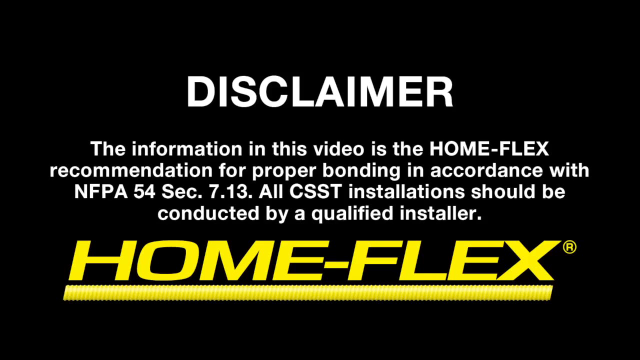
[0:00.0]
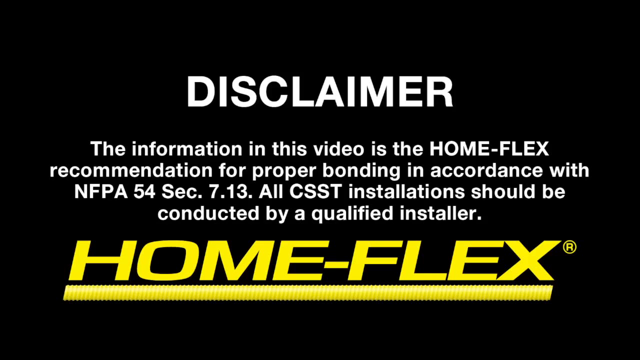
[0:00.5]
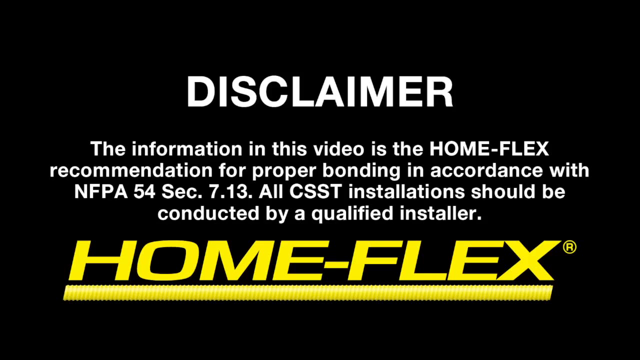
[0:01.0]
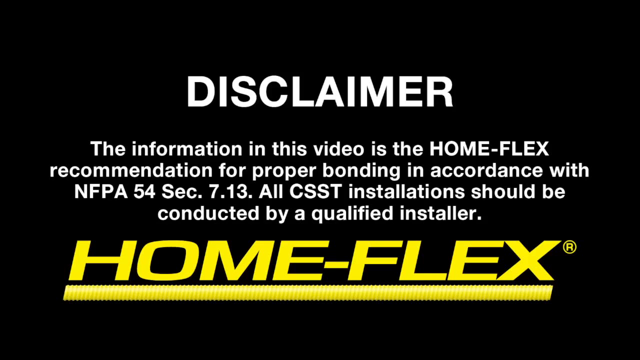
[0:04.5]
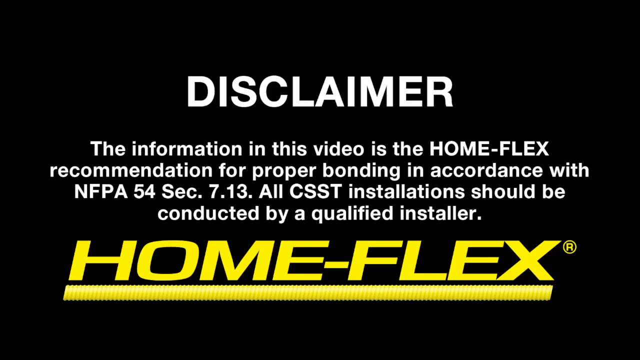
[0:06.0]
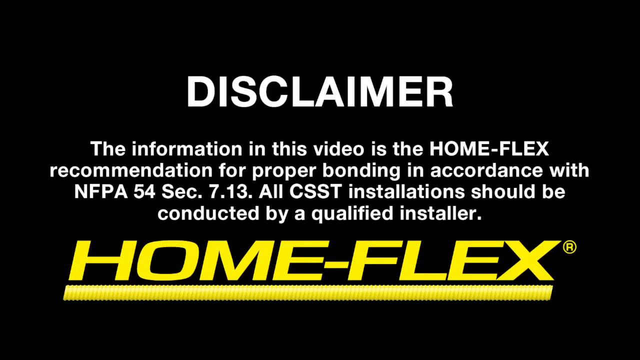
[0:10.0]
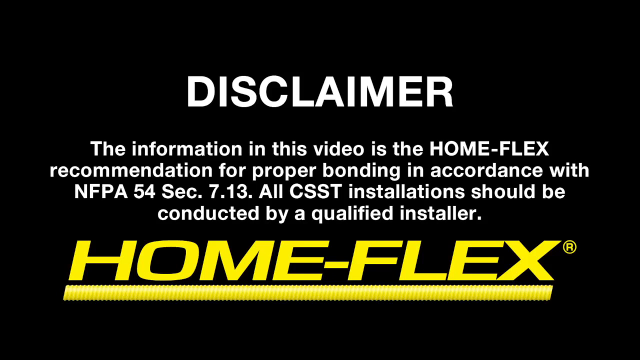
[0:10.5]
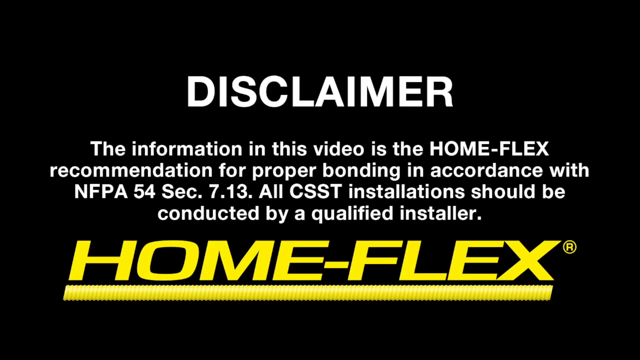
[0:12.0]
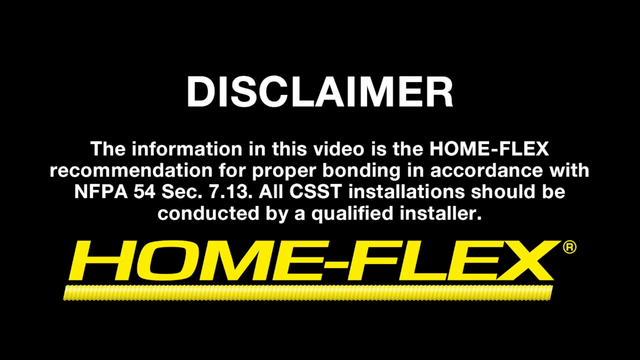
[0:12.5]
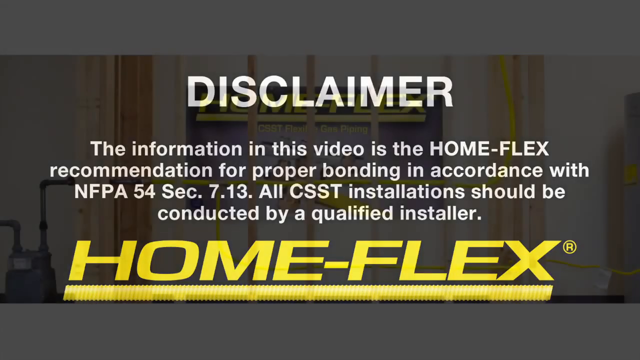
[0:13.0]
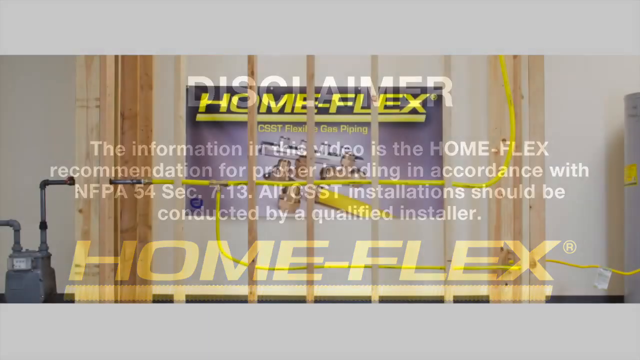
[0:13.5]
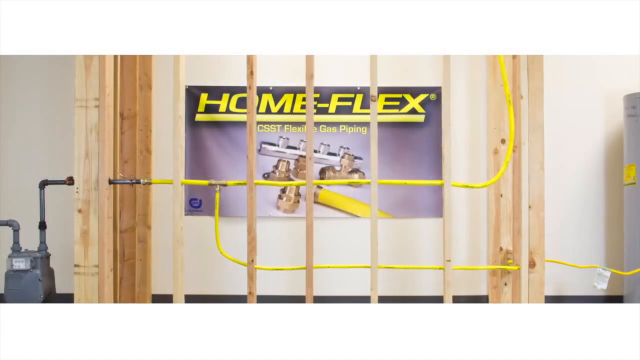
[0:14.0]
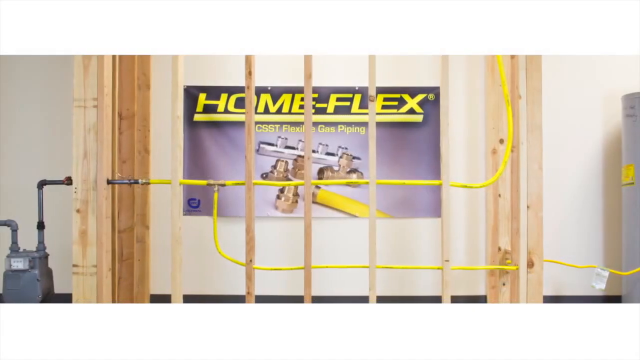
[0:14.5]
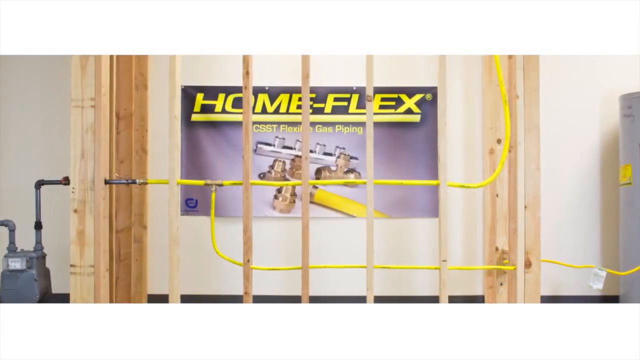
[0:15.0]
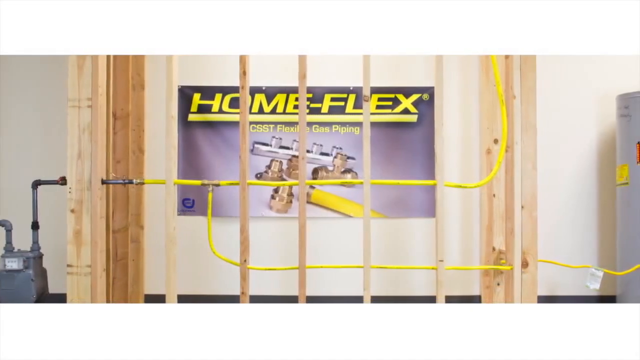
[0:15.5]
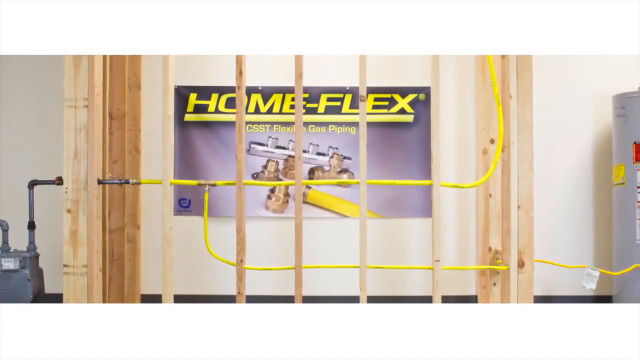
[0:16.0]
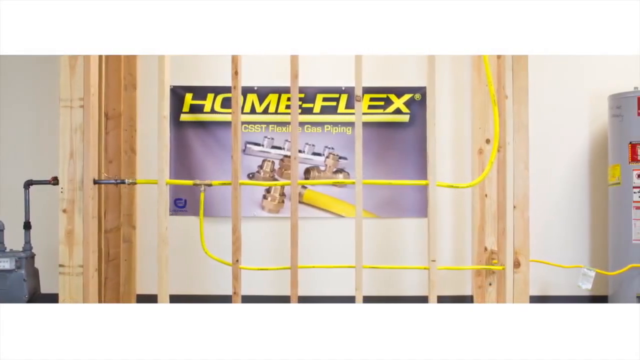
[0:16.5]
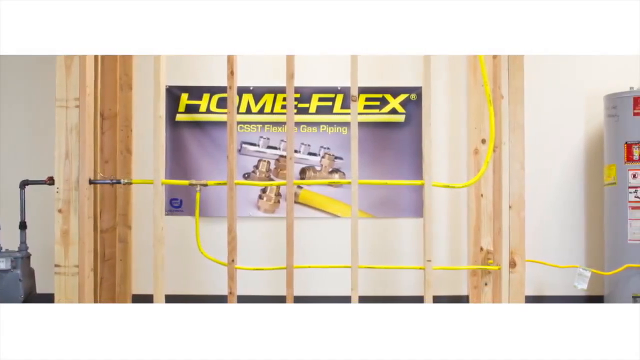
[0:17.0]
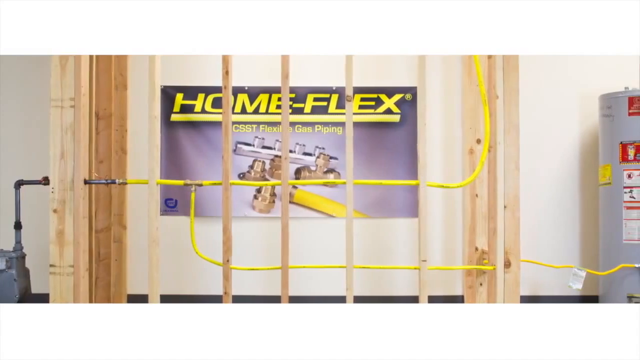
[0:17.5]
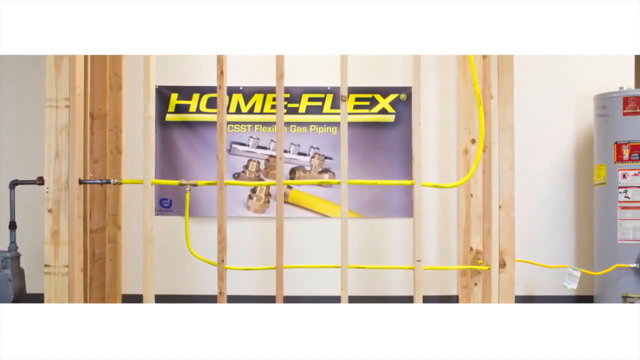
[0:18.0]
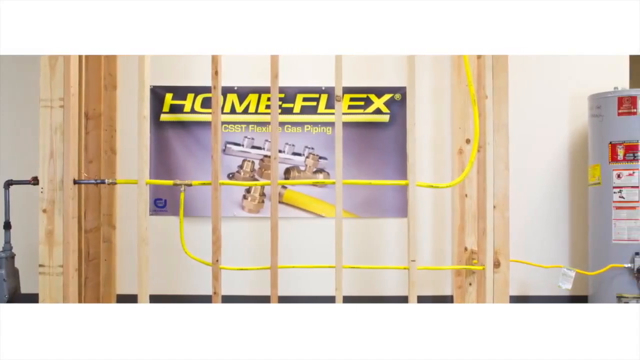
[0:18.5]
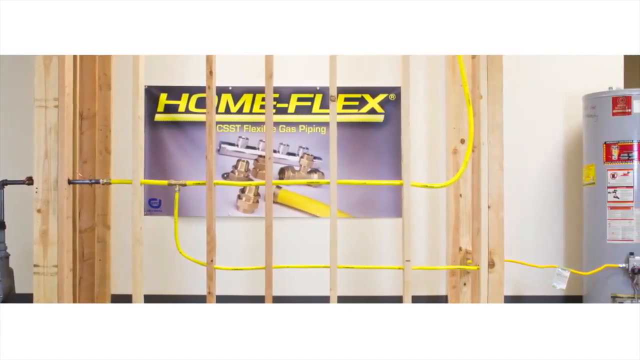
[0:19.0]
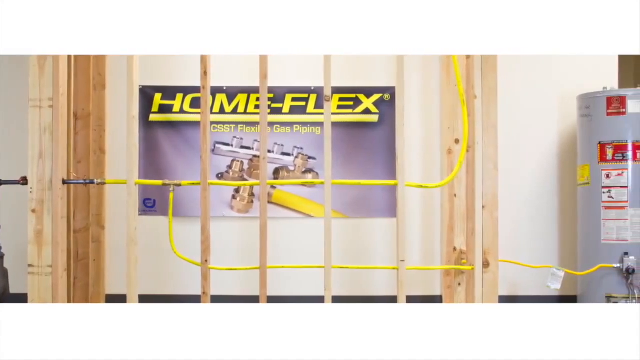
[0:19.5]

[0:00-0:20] The video opens with a disclaimer on a black background. The word "disclaimer" is across the top center of the screen, and the center reads "the information in this video is the HomeFlex recommendation for proper bonding in accordance with the NFPA." At the bottom is "HomeFlex" in yellow text with a yellow line underneath. This static screen stays up for several seconds. The video then transitions to a room of some sort. A wall in the background has a HomeFlex poster on it, and there is some wood in the center of the frame. Toward the left, metal pipes go through the wood parallel to the ground. Where the wood is, the metal pipe turns into a yellow hose of some sort that goes down and then up. In the middle, another hose connects to it, going down and lower, also parallel to the floor. The view holds on this for several seconds, then the camera slowly pans to the right, revealing a water heater on the far right-hand side.